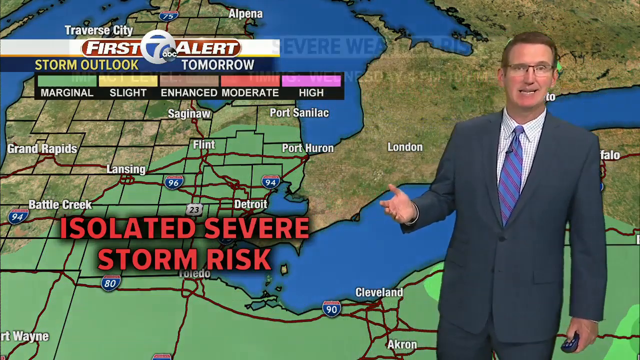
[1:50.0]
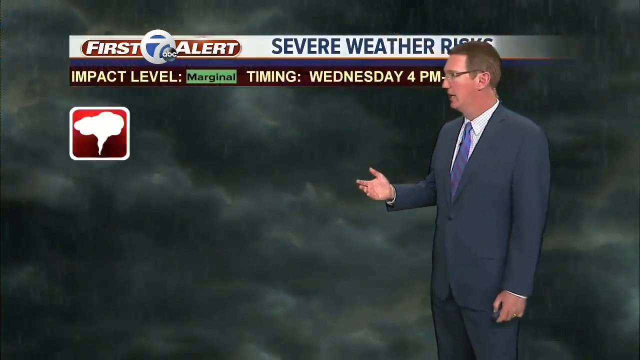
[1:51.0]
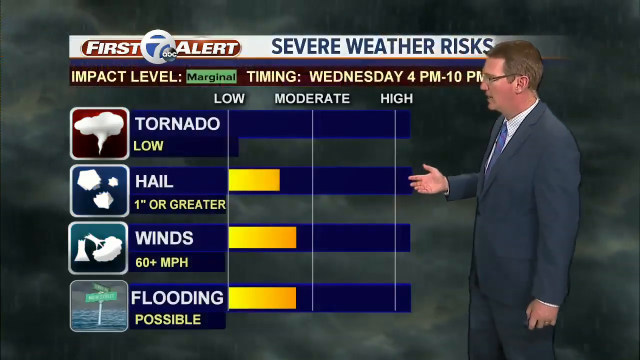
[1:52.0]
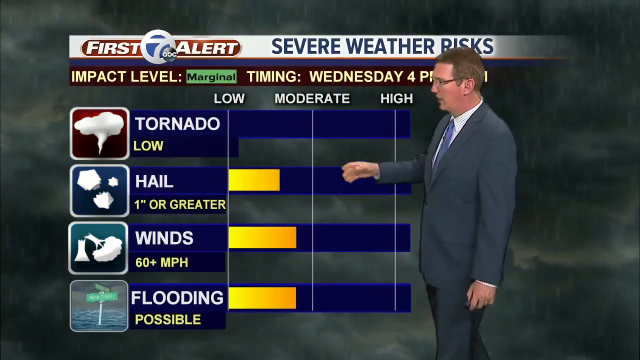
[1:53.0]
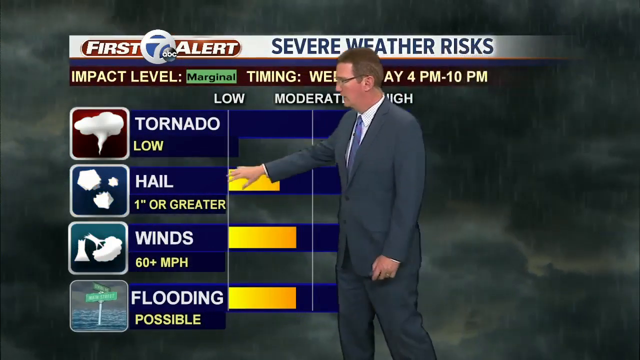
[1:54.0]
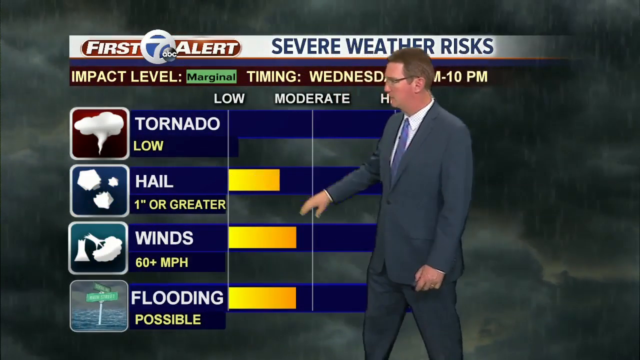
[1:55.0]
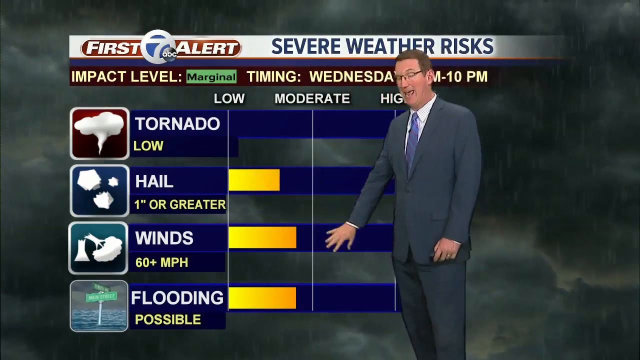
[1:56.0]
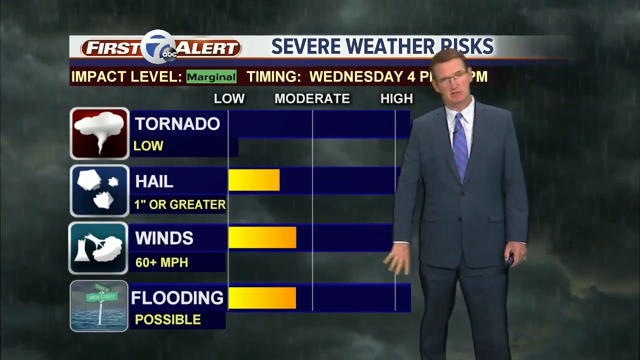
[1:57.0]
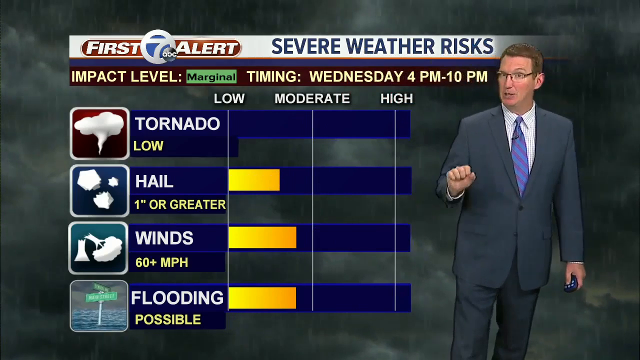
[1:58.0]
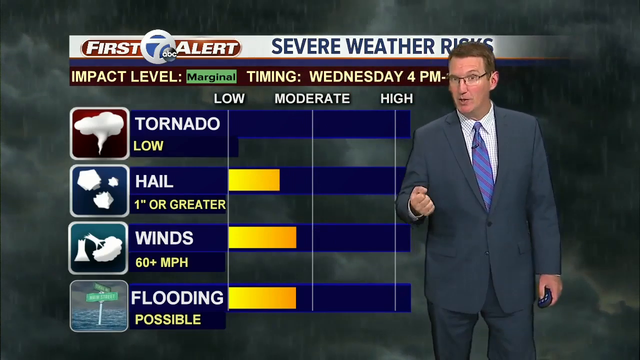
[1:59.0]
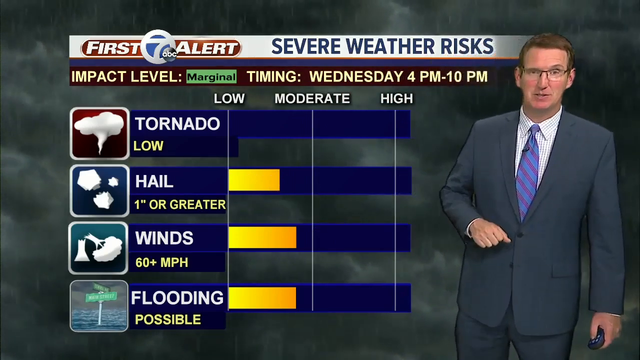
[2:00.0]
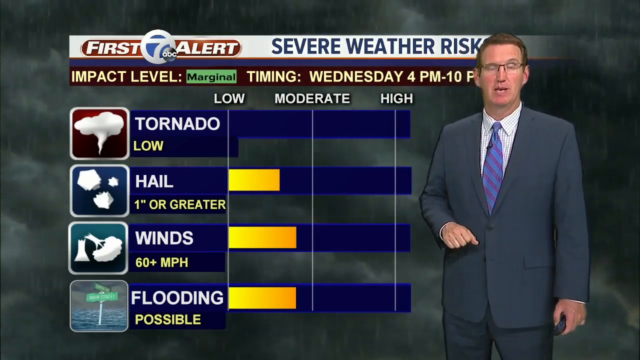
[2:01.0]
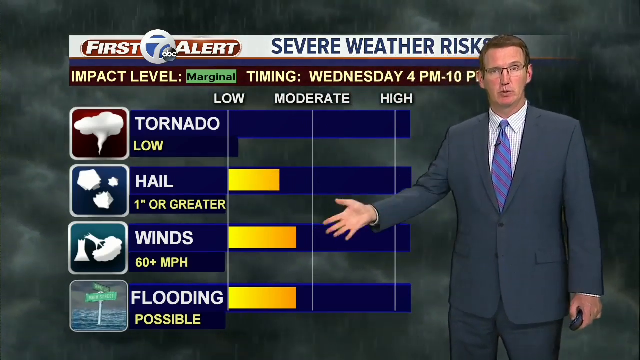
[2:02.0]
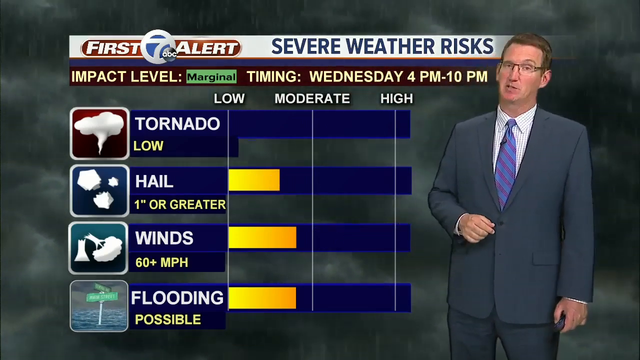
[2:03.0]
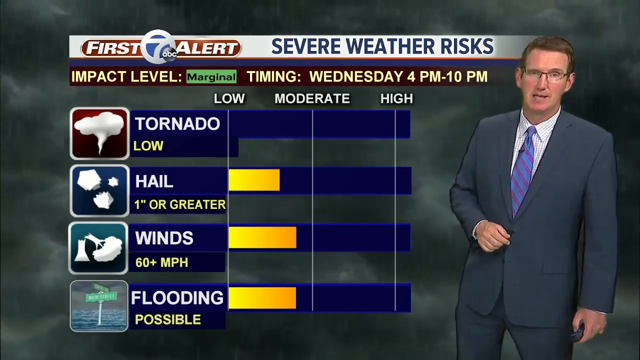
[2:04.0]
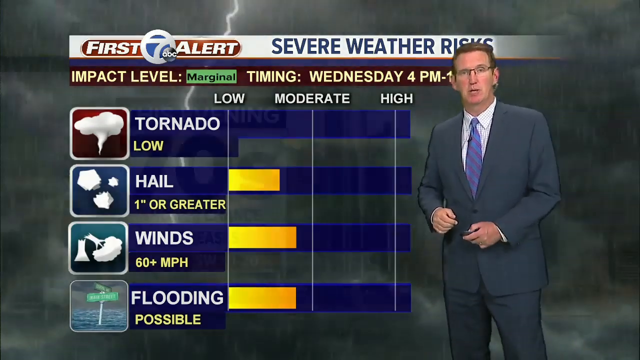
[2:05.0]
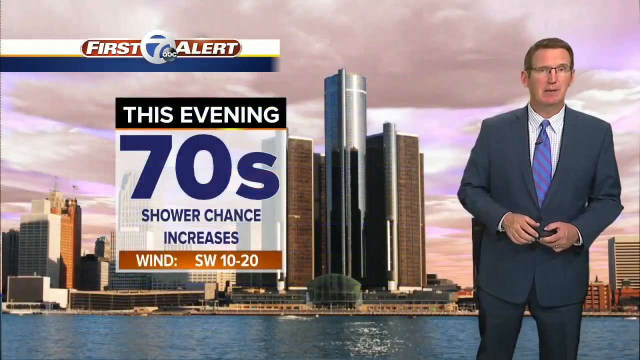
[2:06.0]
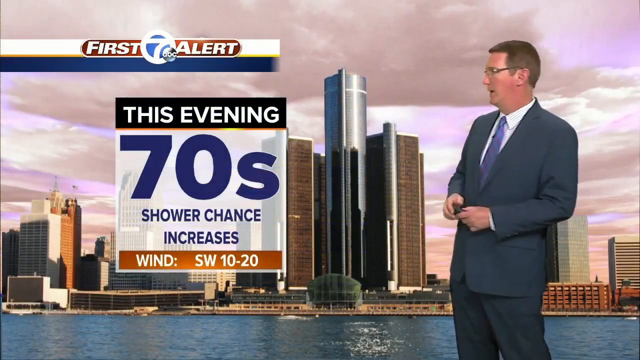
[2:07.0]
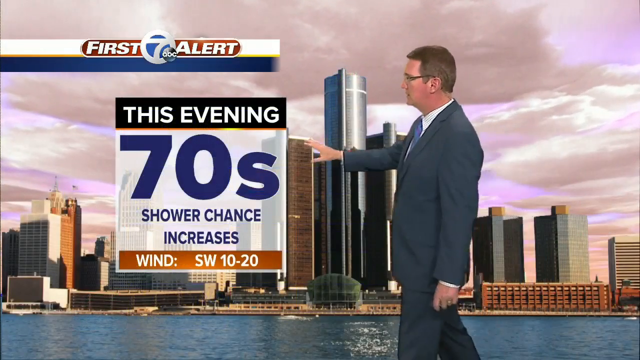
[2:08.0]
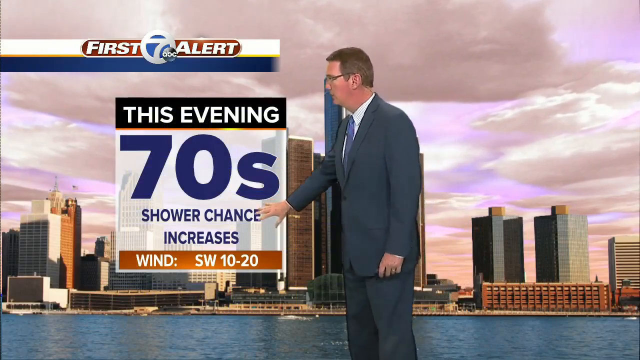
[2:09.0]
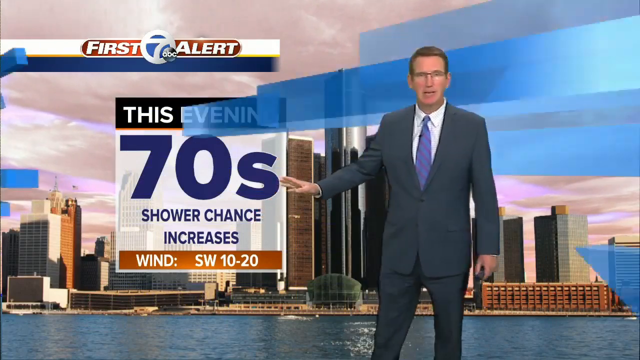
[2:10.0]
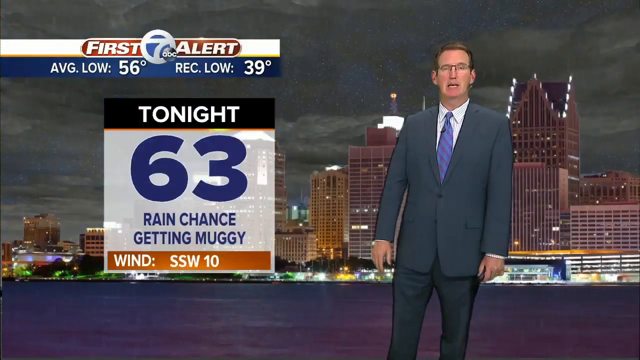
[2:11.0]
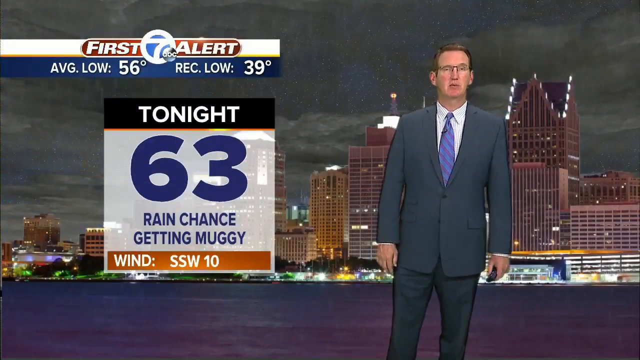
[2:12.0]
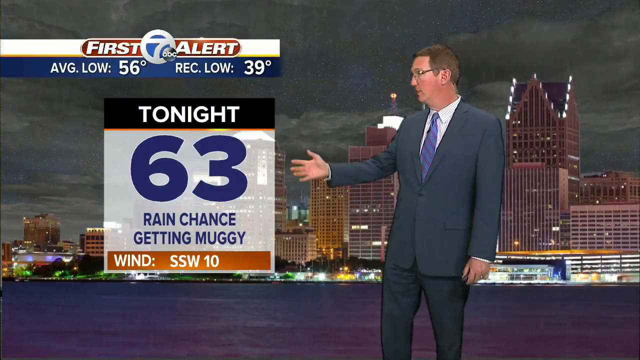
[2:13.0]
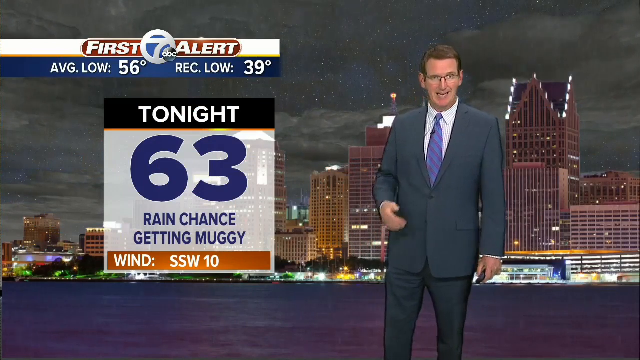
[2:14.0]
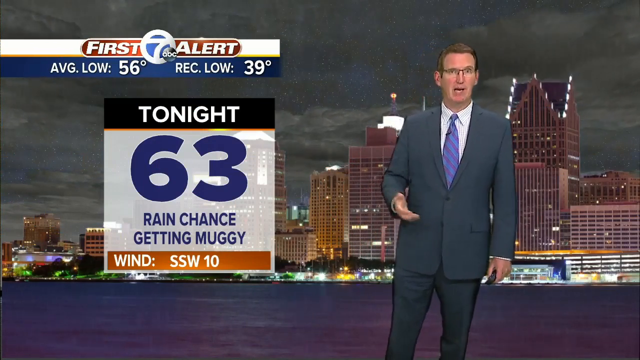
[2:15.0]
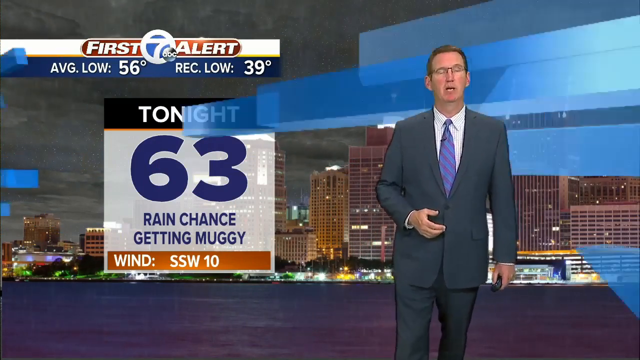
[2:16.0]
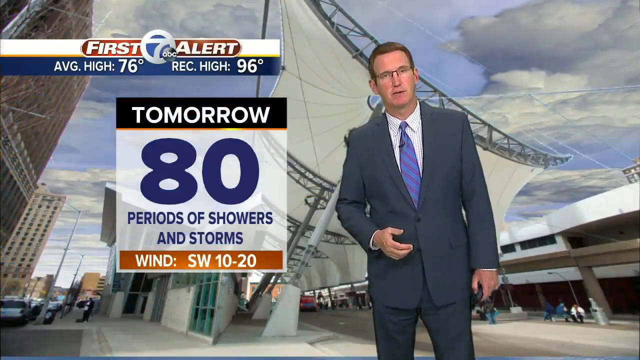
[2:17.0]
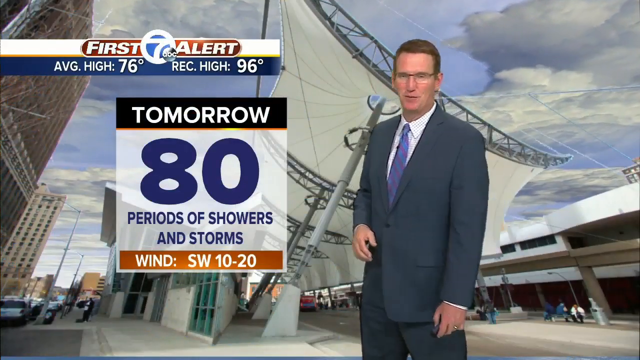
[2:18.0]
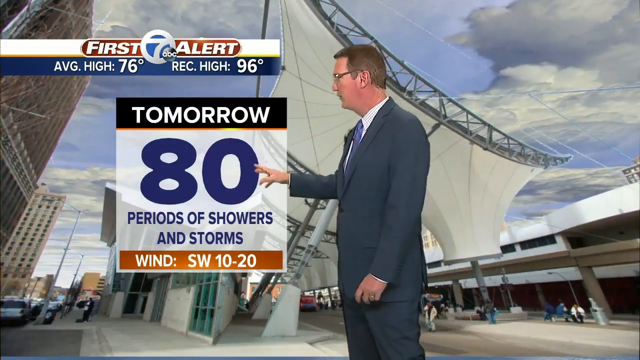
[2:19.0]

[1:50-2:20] A risk graphic shows impact level, margin and timing: Wednesday 4 p.m. till 10 p.m., tornadoes low, hail one or greater, wind 60-plus mph, and flooding possible. A man in a gray suit presents this in front of a background of rain and thunderstorms with black clouds. The forecast shows this evening in the 70s with an increasing shower chance and southwest wind; tonight 63 with a rain chance, getting muggy, wind west 10 and south-southwest 10. The average low is 56 degrees and the record low is 39 degrees. Tomorrow shows 80 with periods of showers.